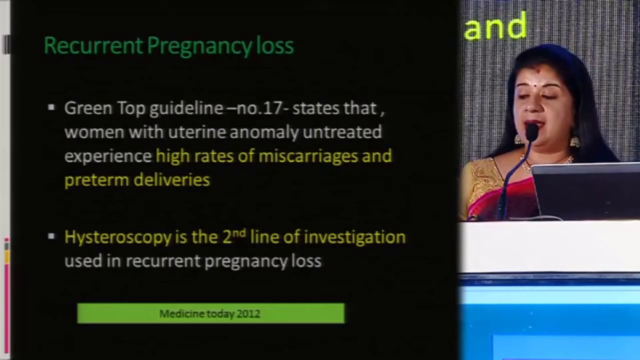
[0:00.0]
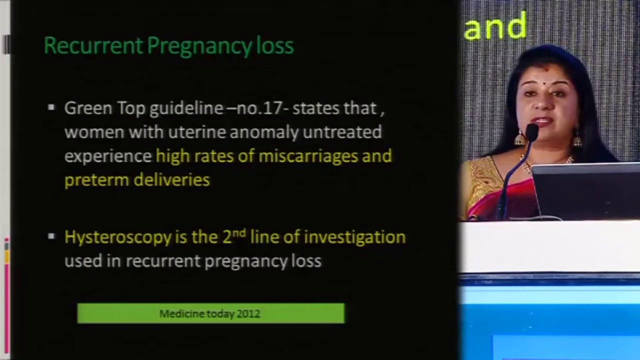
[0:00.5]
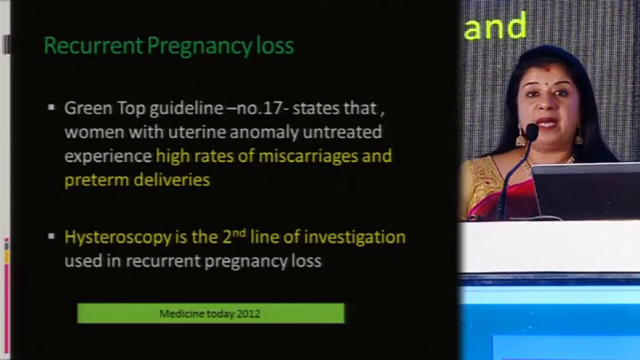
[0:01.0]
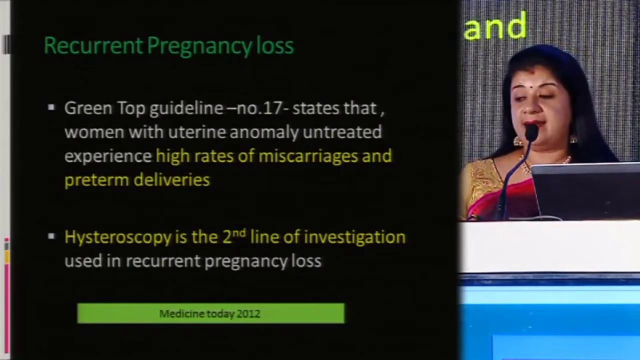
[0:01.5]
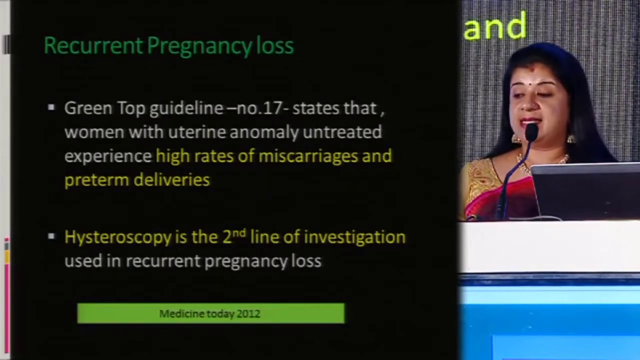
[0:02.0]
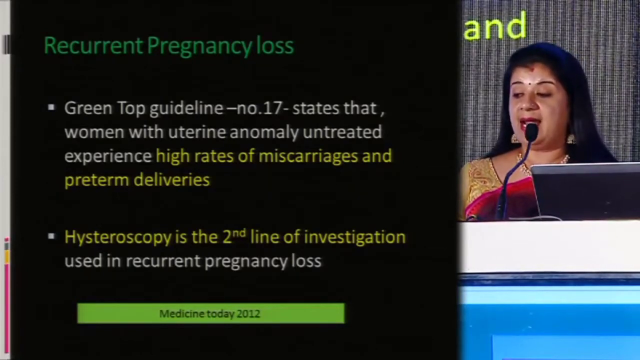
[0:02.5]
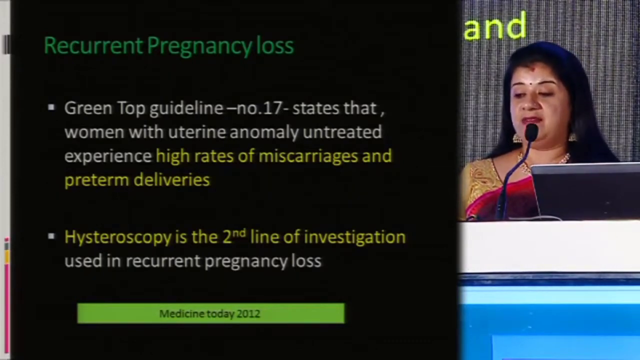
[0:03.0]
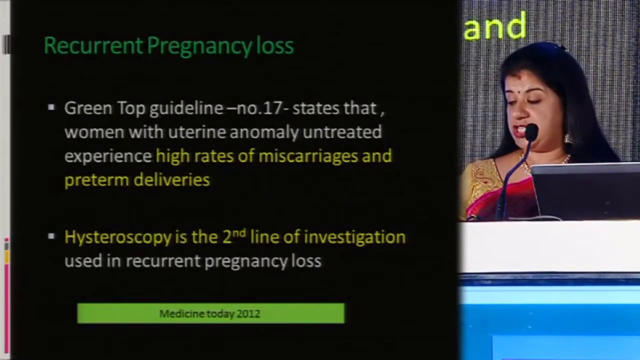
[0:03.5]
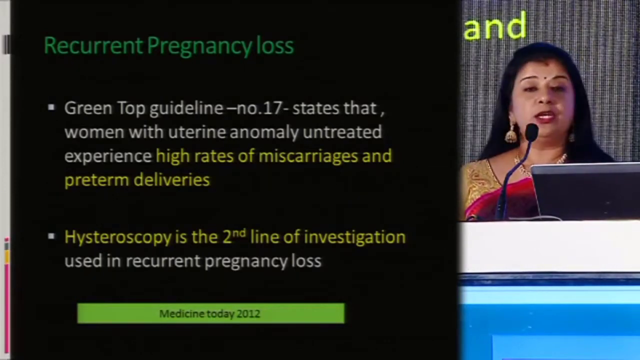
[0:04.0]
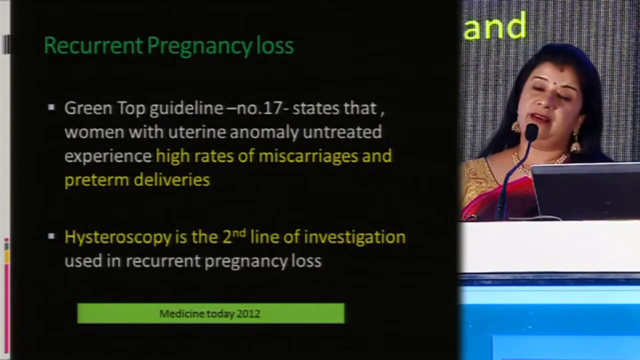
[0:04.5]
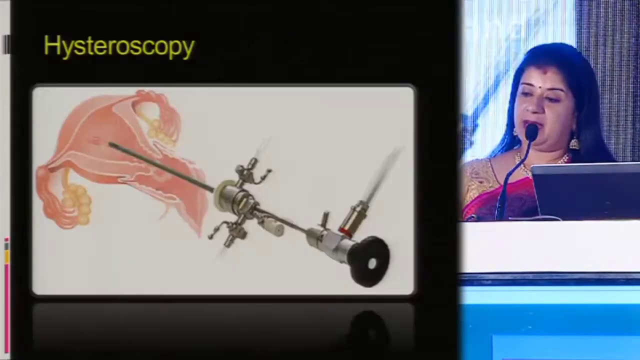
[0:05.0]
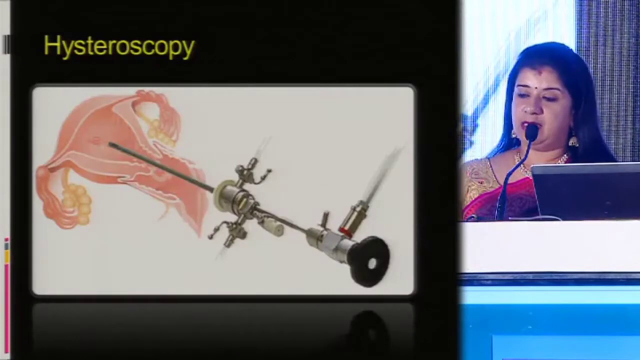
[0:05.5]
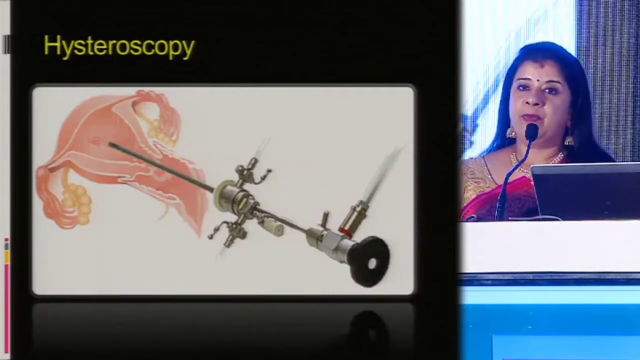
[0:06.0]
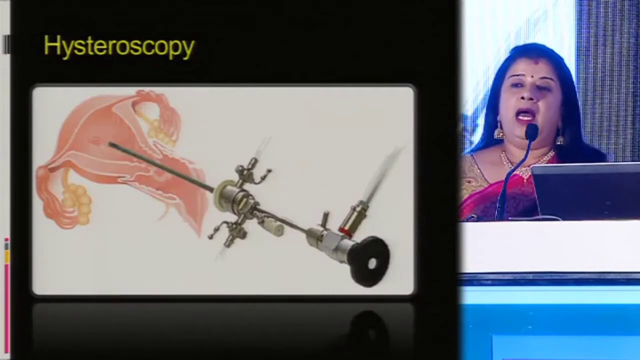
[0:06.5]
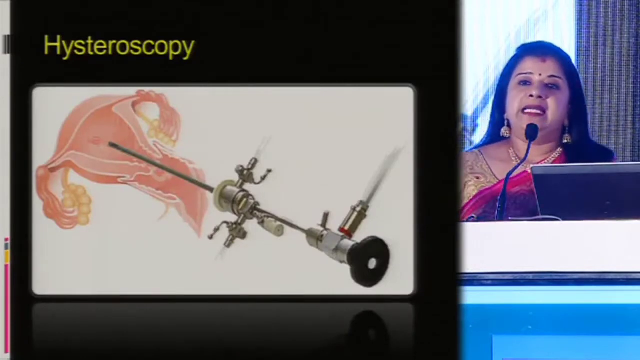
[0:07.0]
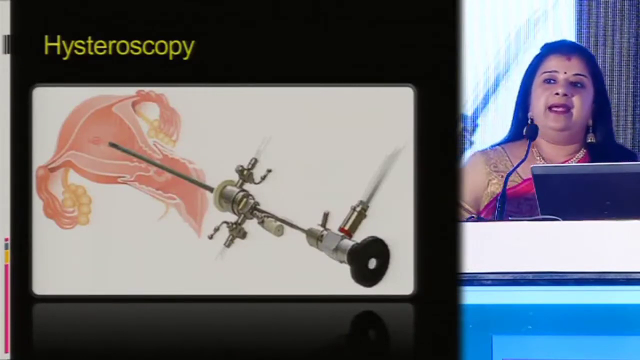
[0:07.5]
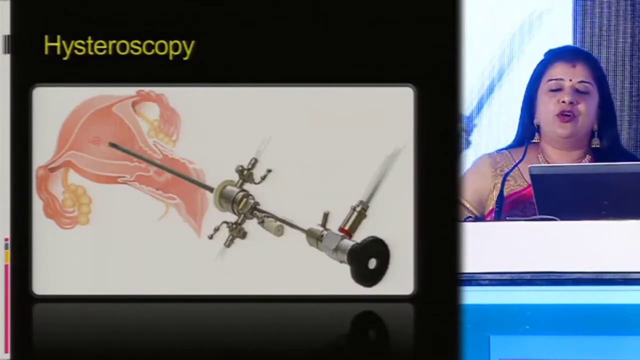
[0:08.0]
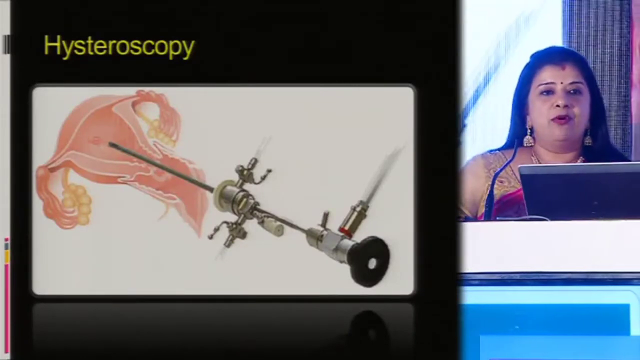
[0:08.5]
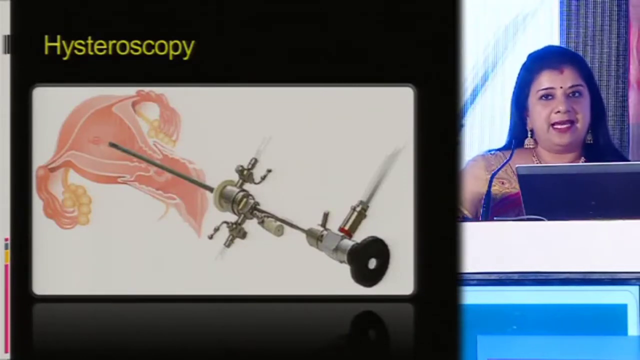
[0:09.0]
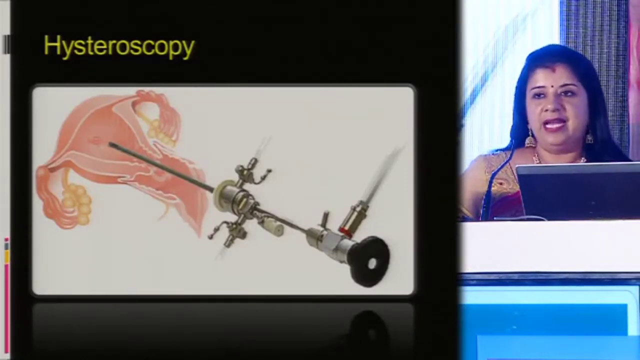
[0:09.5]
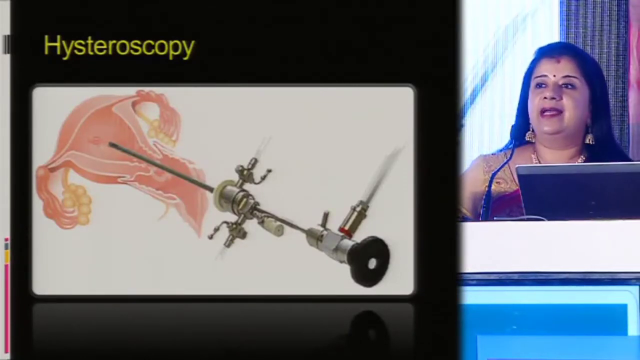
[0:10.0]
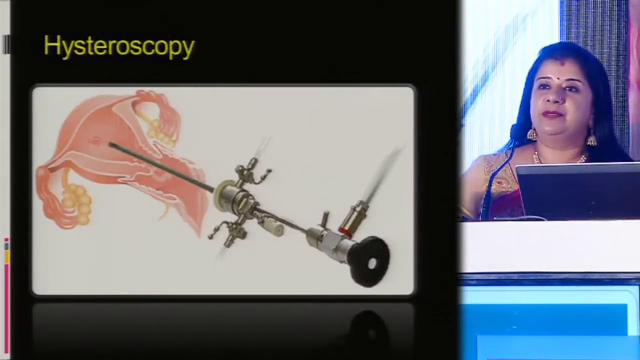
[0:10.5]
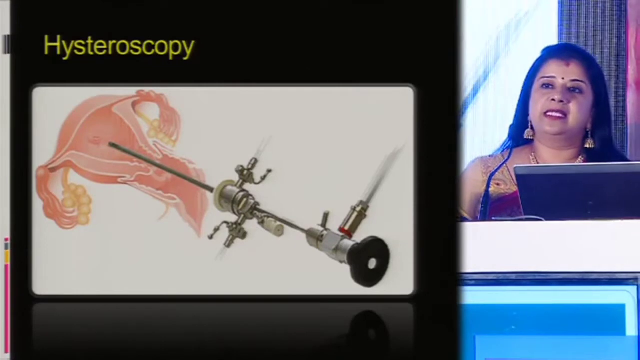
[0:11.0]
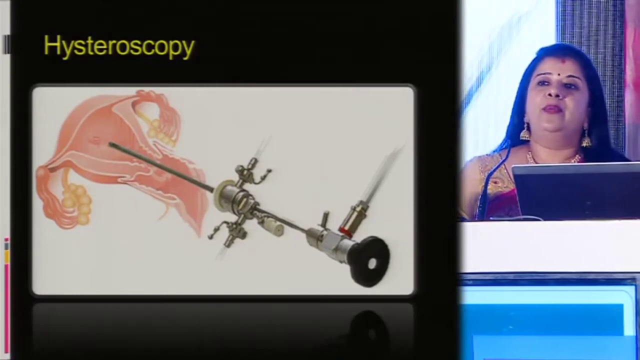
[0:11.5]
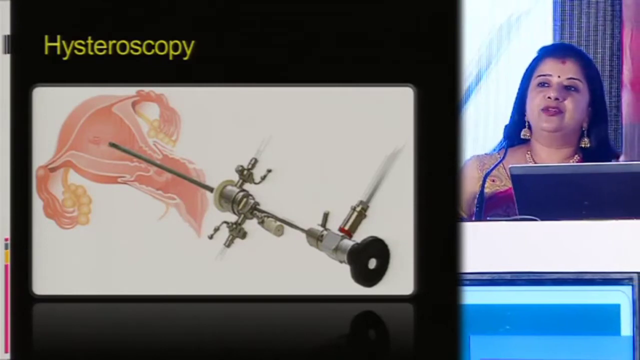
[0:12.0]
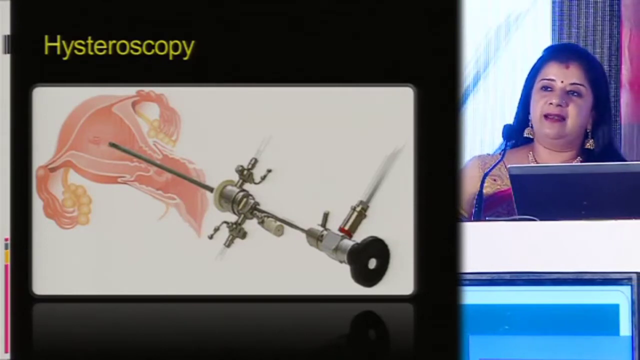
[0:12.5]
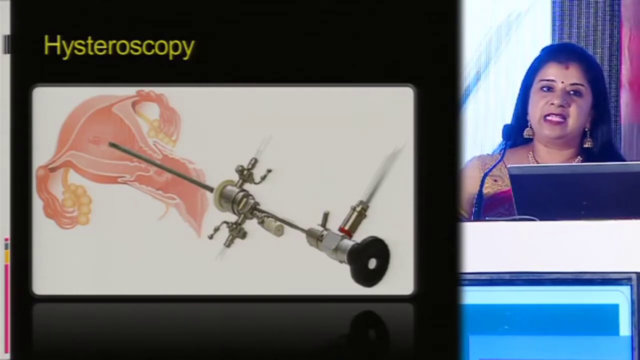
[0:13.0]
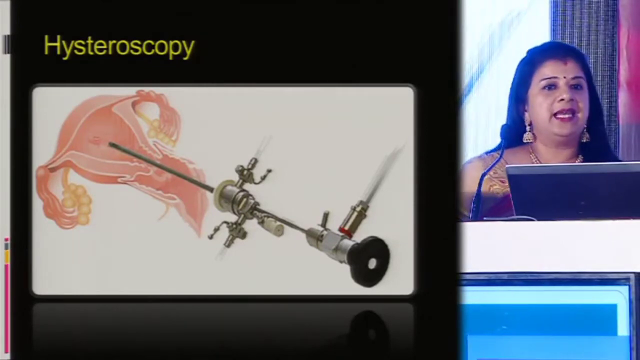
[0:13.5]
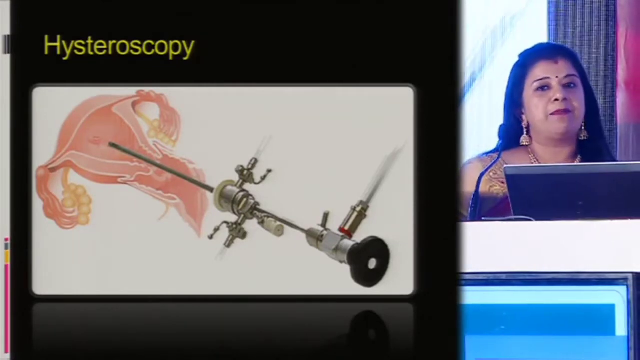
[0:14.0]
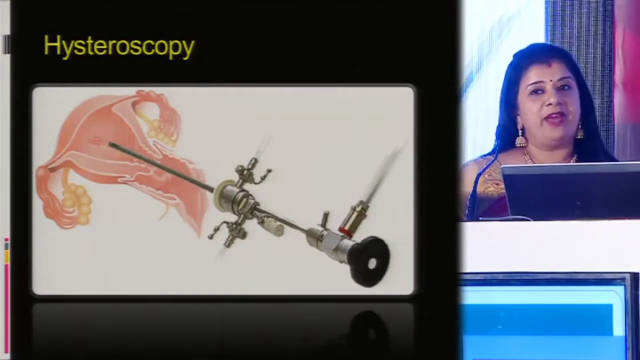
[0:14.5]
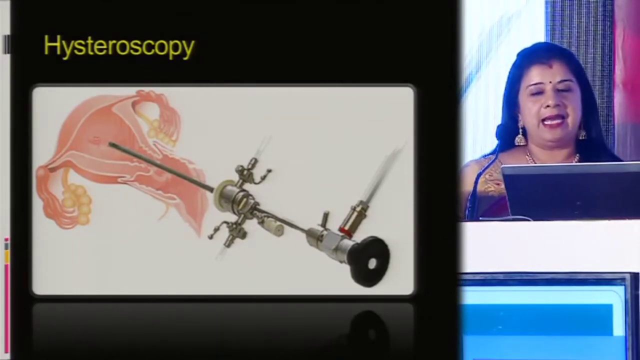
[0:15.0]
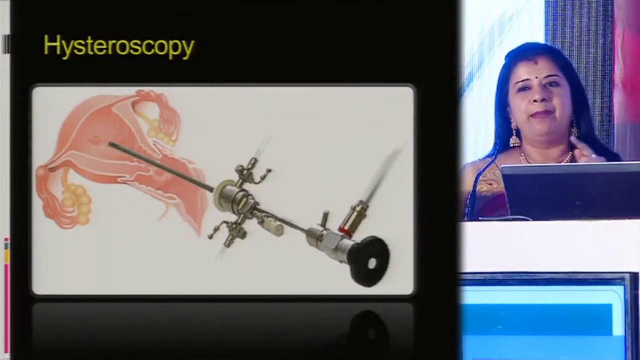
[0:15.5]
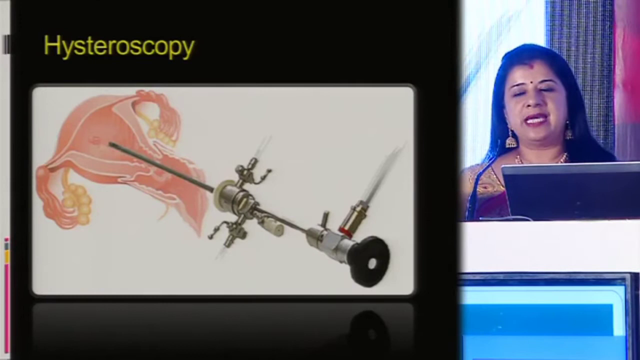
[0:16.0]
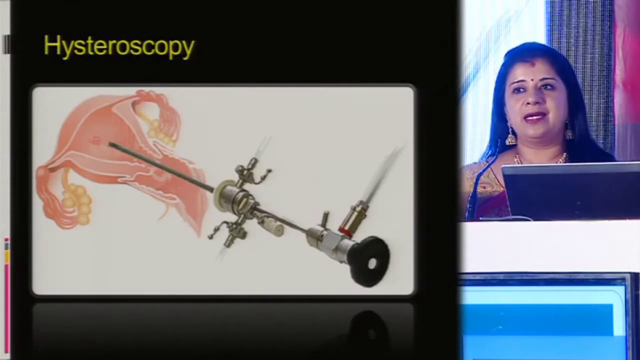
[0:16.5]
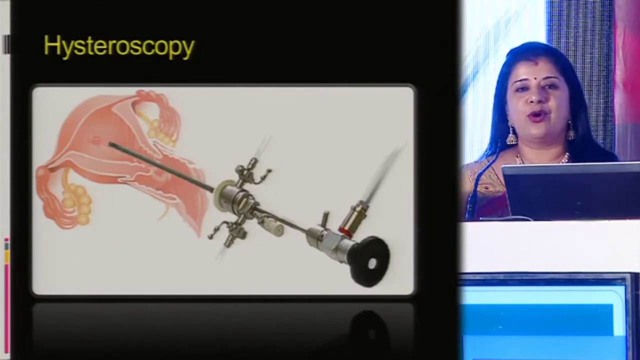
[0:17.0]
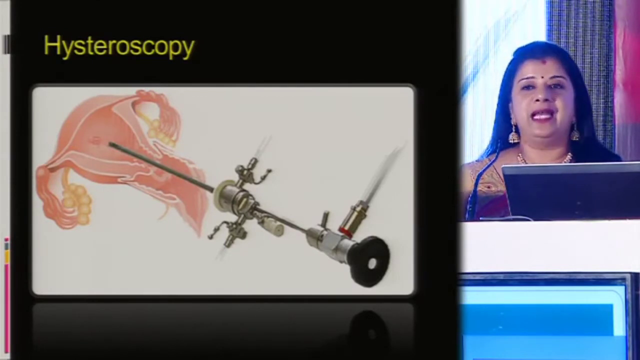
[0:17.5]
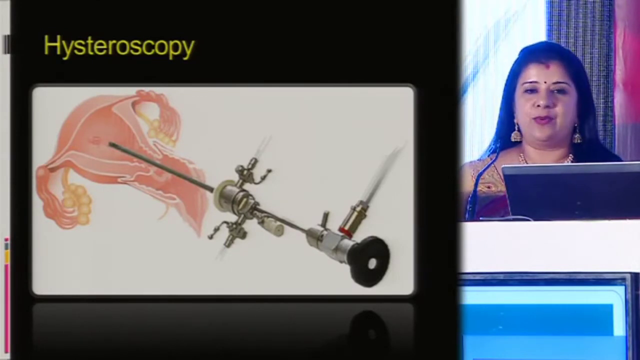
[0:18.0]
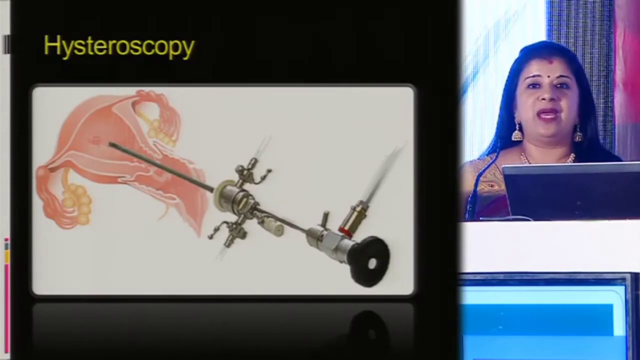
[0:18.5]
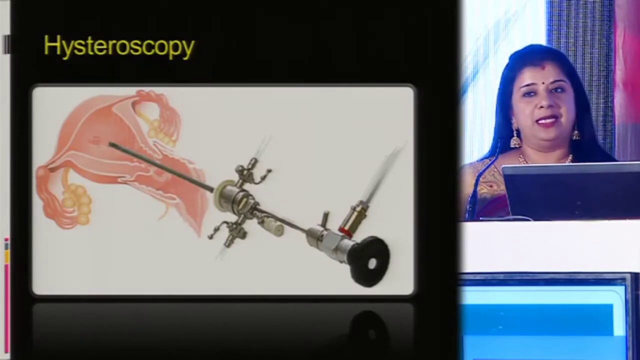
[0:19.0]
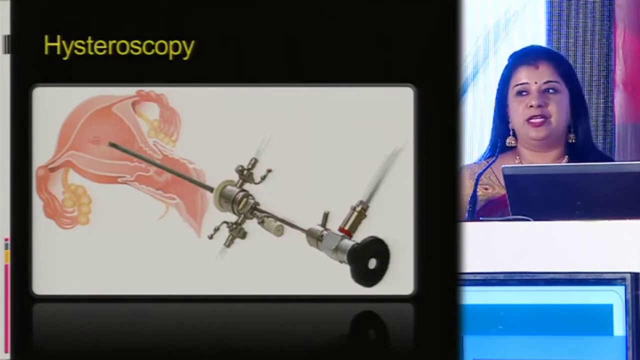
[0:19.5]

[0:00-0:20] A woman sits behind a computer or desk with a microphone in front of her. On the screen is what appears to be a slide titled "recurrent pregnancy loss." The first bullet point says "green top guideline number 17 states that women with uterine anomaly, untreated experience, high rates of miscarriages, and preterm deliveries." The other bullet point reads "hysteroscopy is the second line of investigation used in recurrent pregnancy loss." The view then changes to what appears to be a device going into the uterus; it is unclear what it is, but it almost looks like a long needle with a black top being put inside the uterus. The object going in appears to be a metal device with a cylinder on the top and a needle-like point at the bottom.